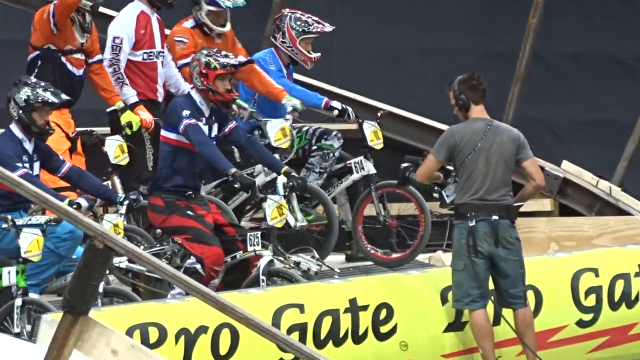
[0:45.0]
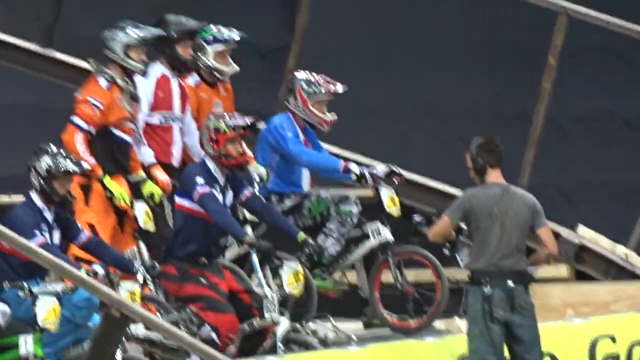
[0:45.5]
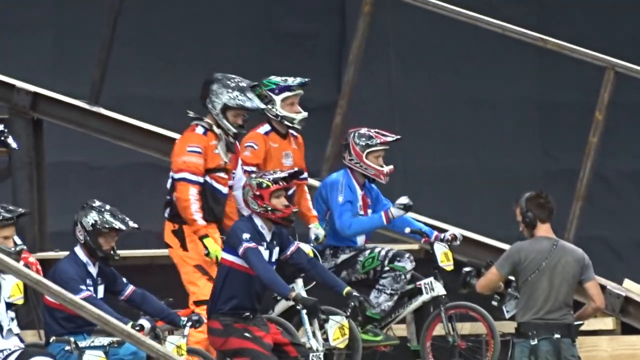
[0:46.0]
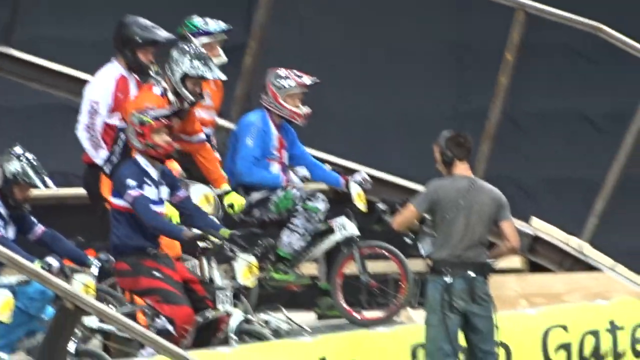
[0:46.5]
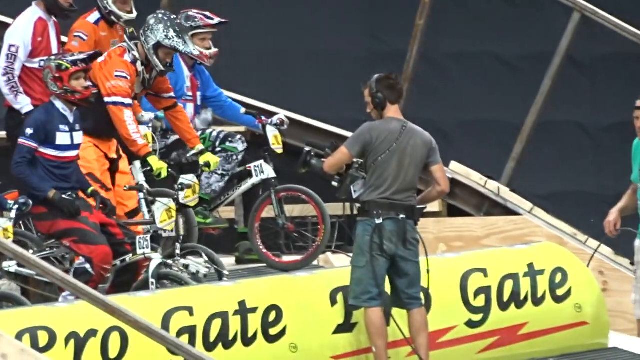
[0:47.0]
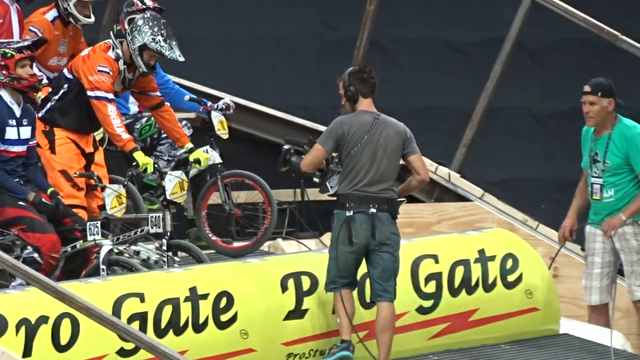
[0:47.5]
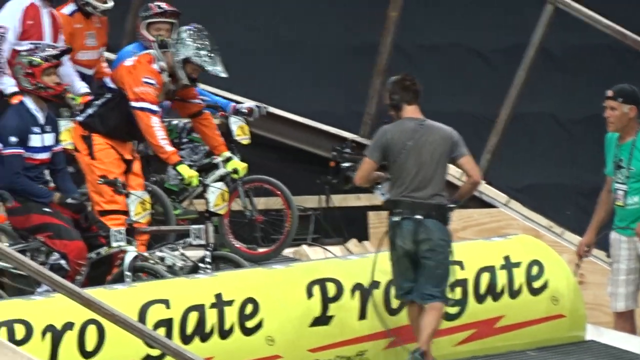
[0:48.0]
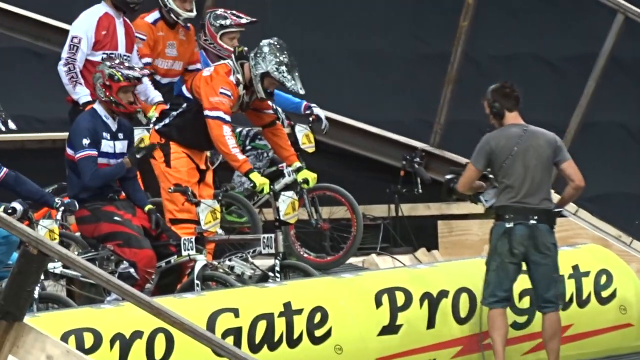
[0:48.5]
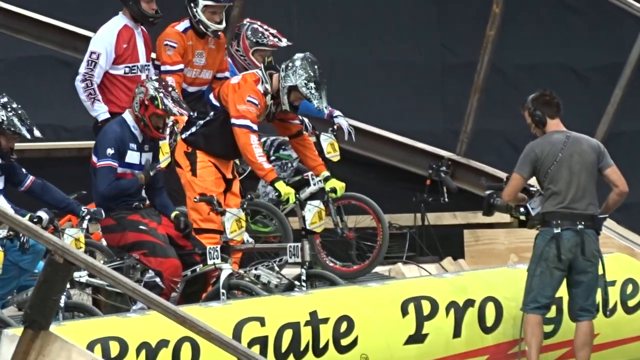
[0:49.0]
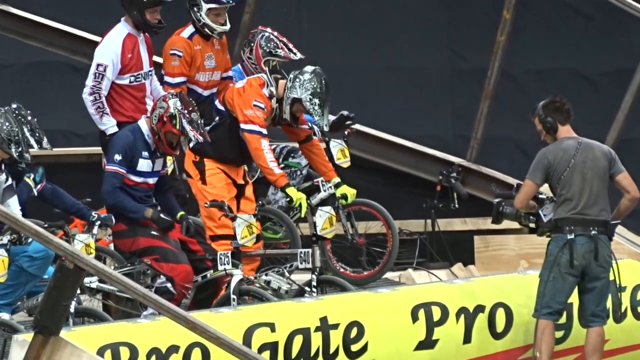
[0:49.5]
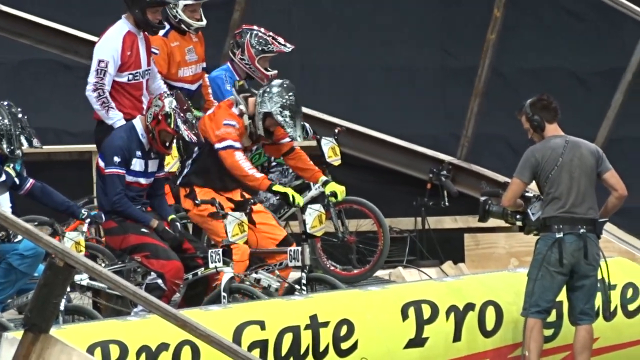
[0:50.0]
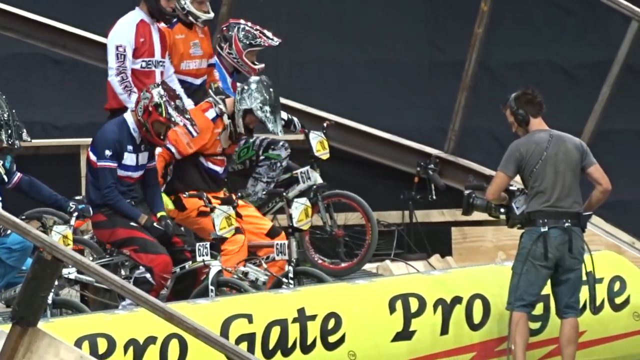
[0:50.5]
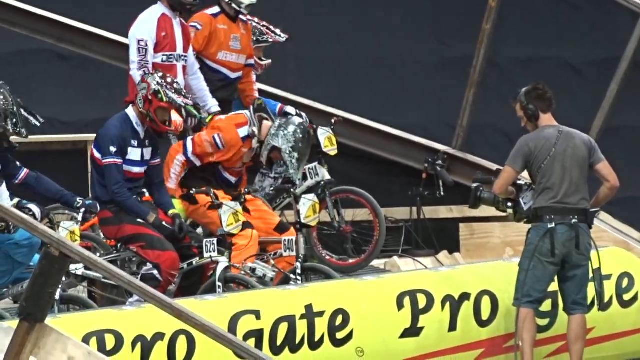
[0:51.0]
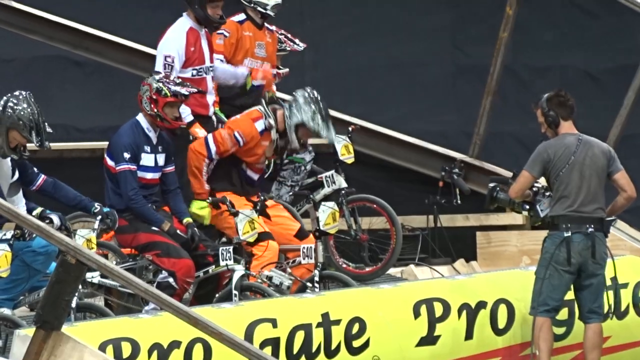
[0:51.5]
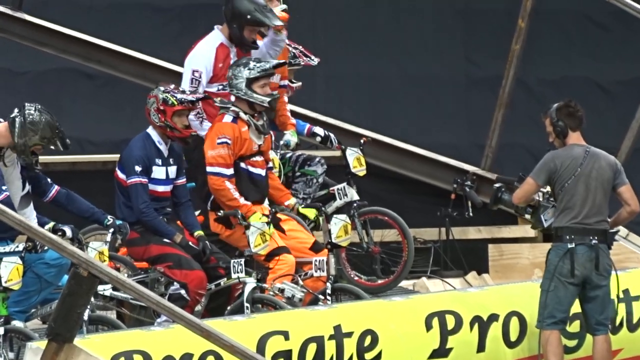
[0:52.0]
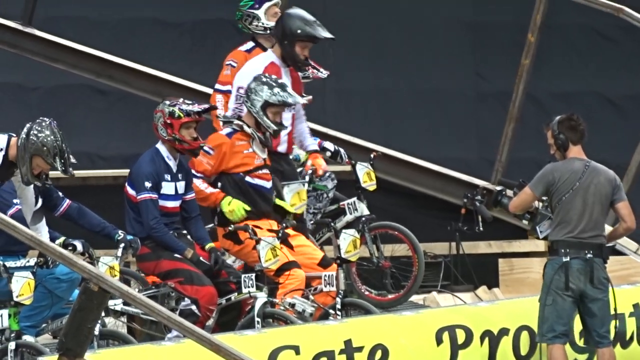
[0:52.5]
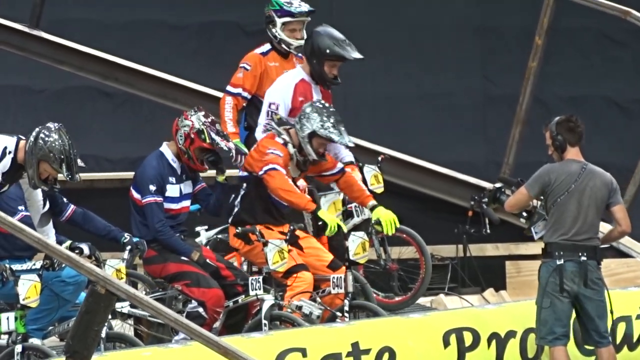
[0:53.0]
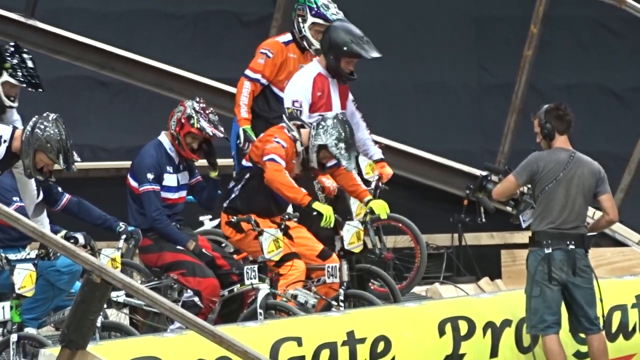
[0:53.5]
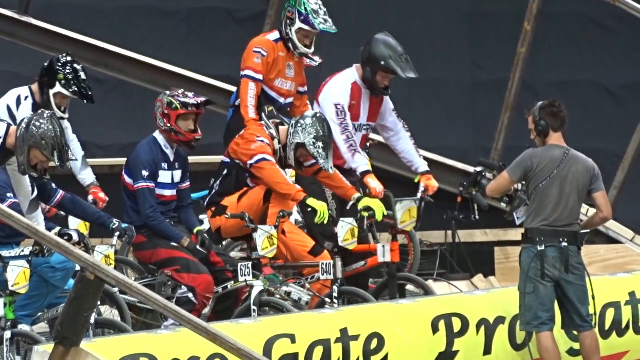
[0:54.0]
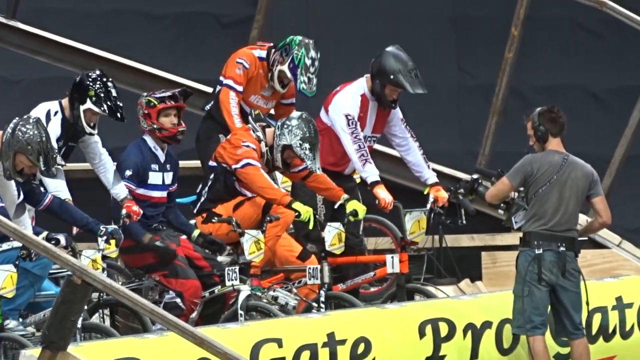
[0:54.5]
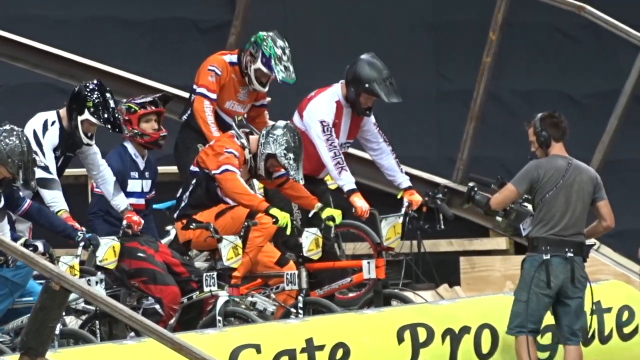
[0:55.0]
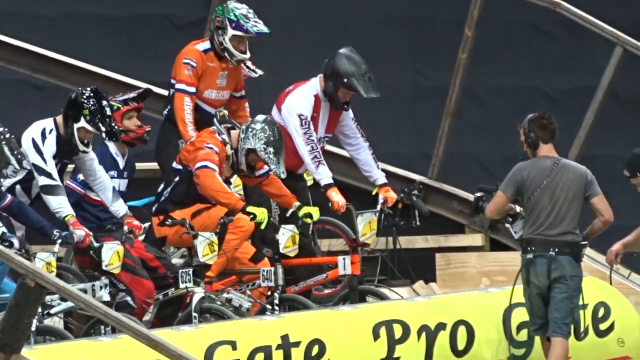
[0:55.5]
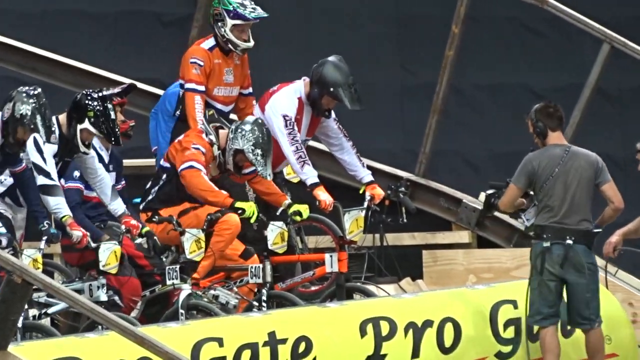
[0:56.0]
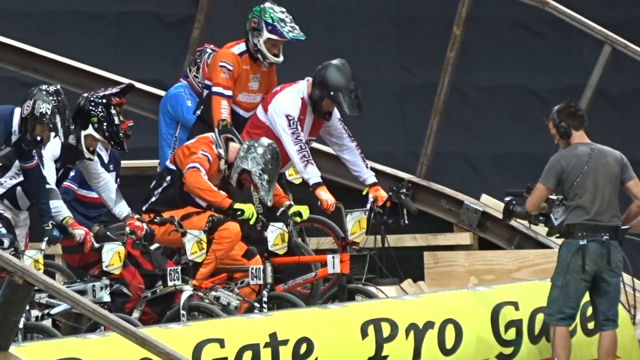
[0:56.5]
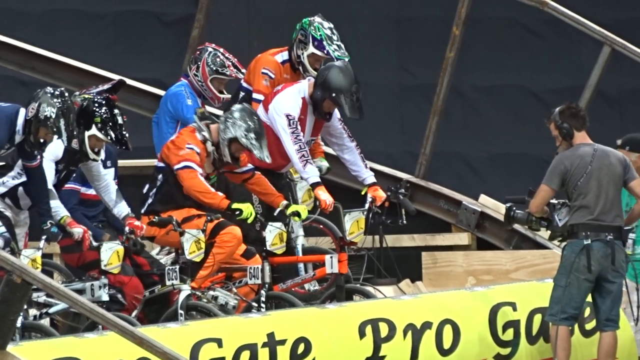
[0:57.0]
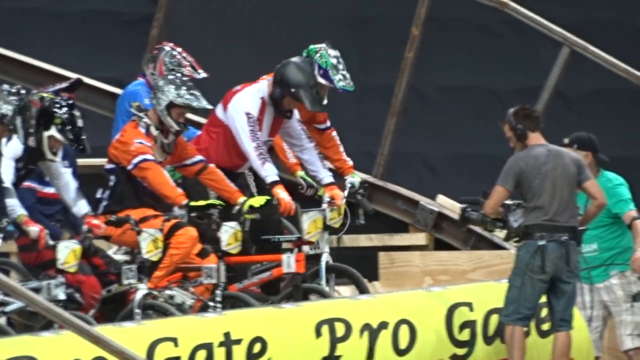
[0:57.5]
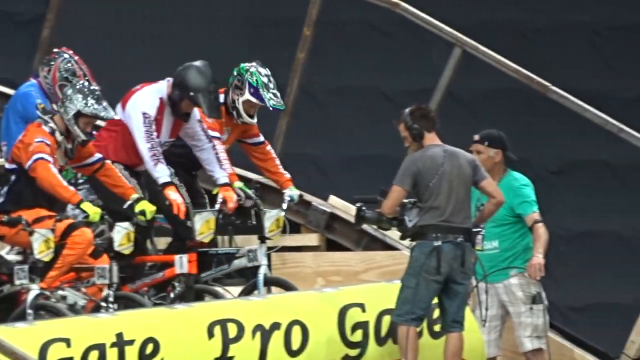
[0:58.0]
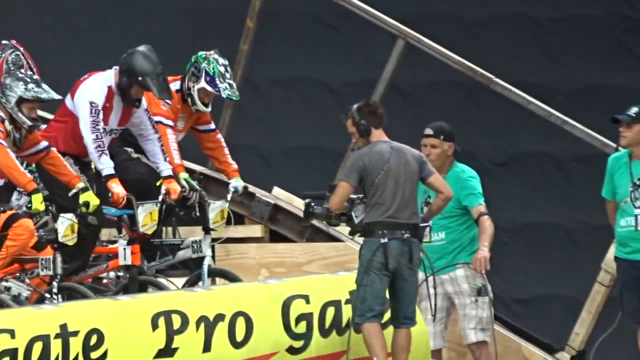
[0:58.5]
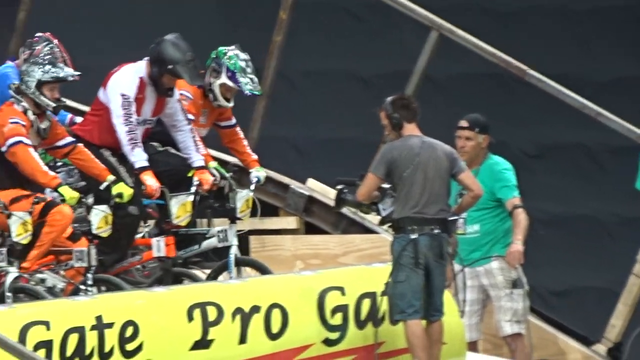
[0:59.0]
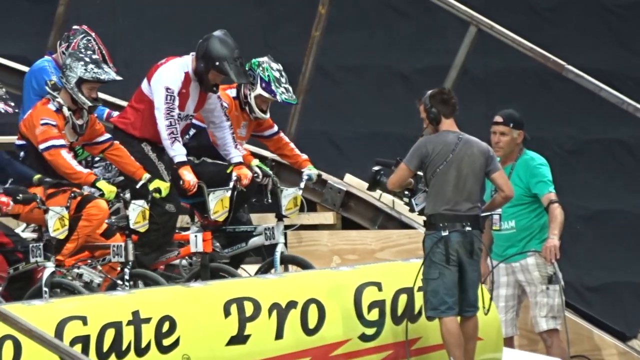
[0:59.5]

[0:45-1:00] The same group of bikers is still hyping themselves up, getting ready to ride the race. They look ready on their bikes, apparently waiting for the gate to drop.